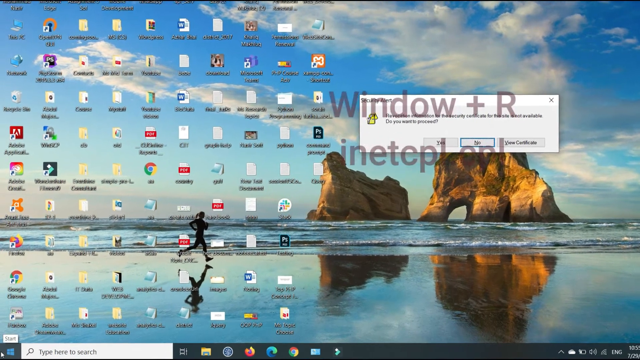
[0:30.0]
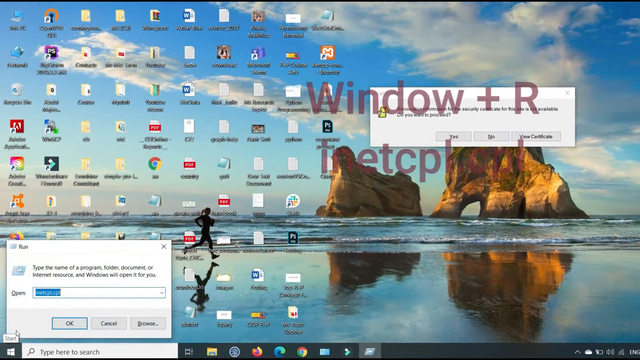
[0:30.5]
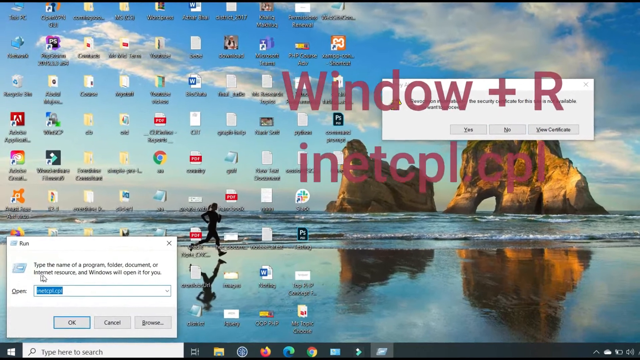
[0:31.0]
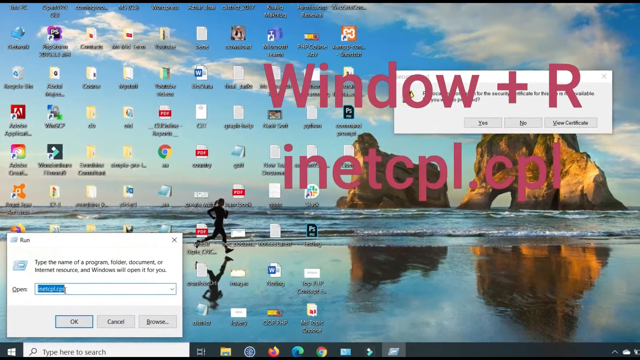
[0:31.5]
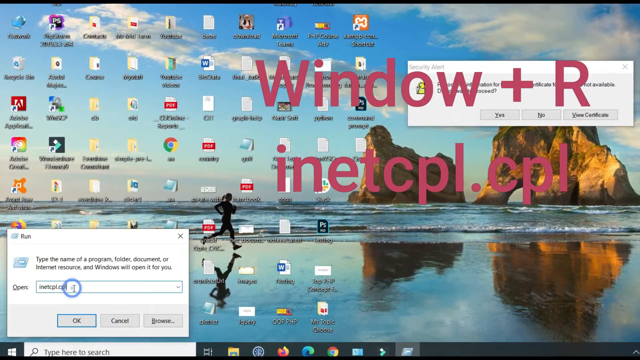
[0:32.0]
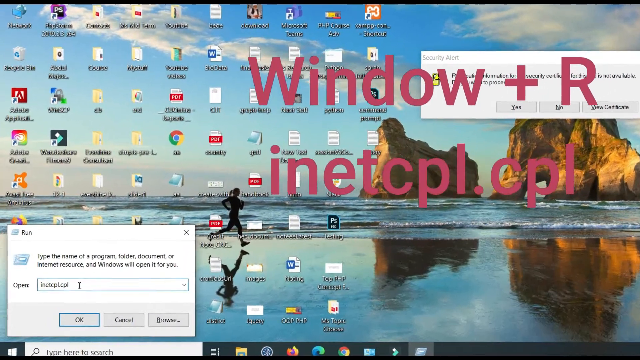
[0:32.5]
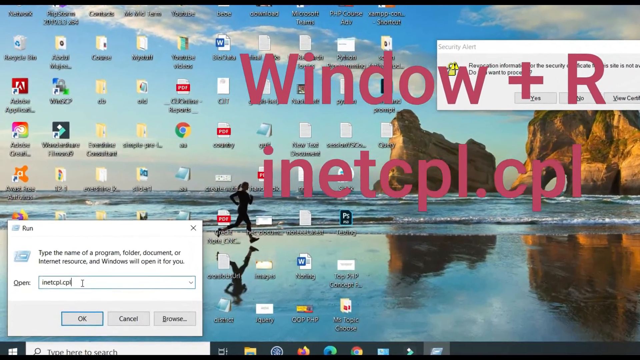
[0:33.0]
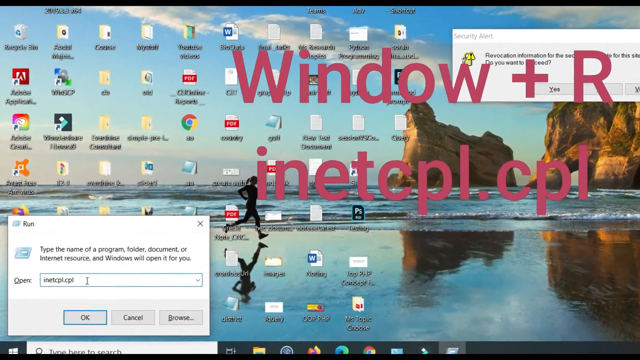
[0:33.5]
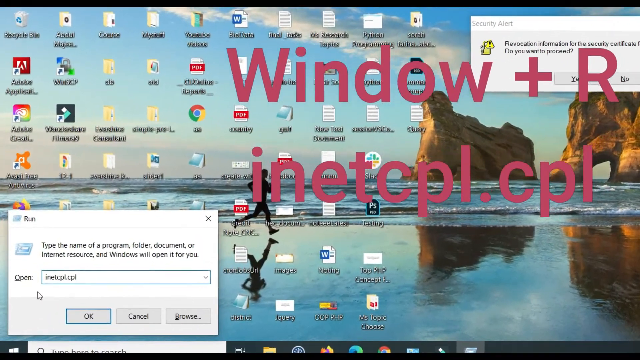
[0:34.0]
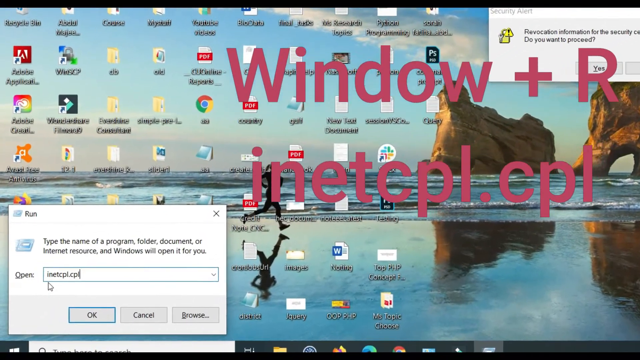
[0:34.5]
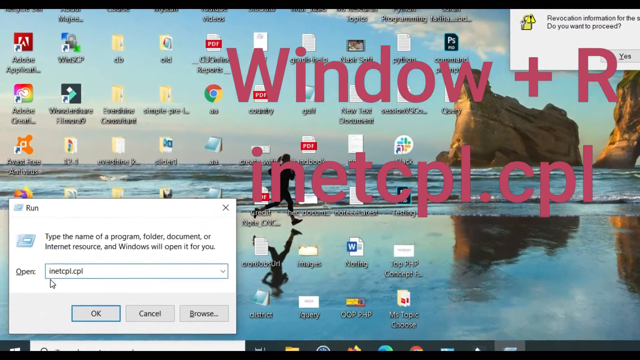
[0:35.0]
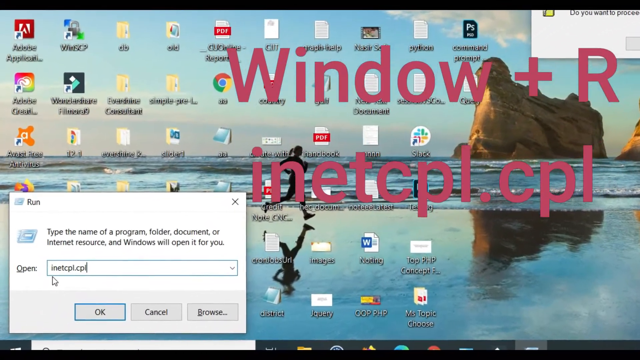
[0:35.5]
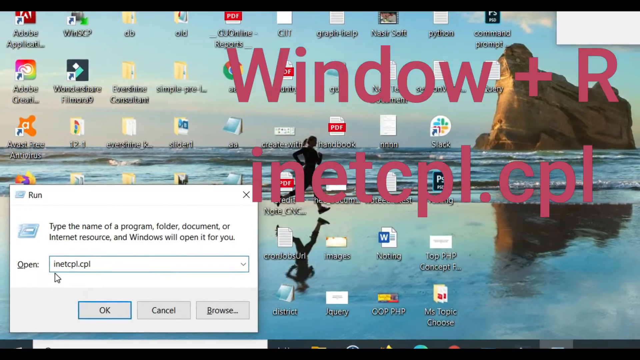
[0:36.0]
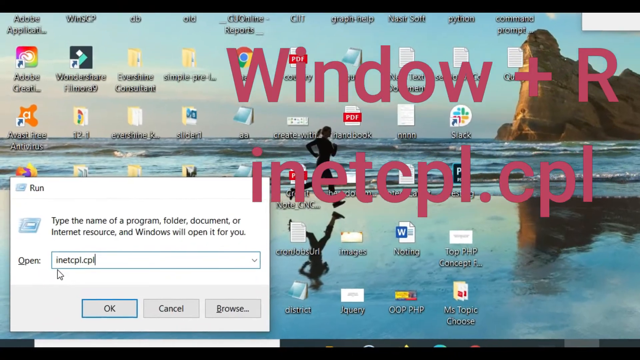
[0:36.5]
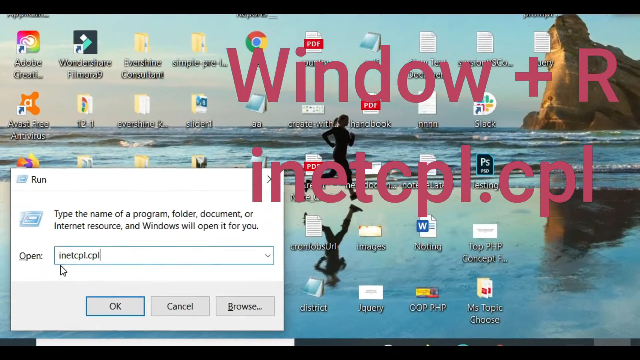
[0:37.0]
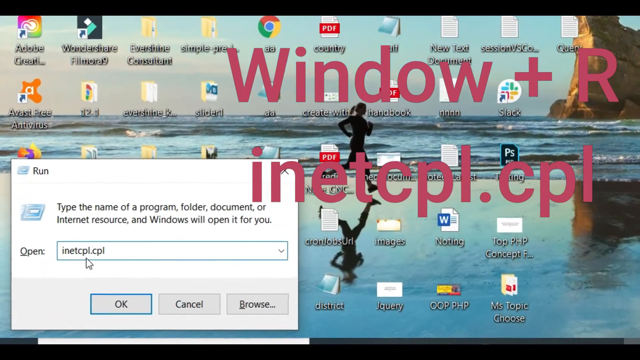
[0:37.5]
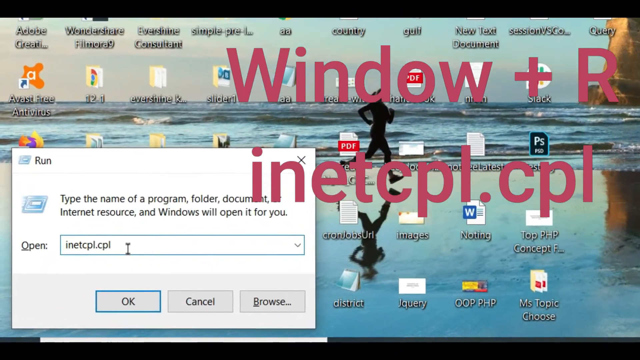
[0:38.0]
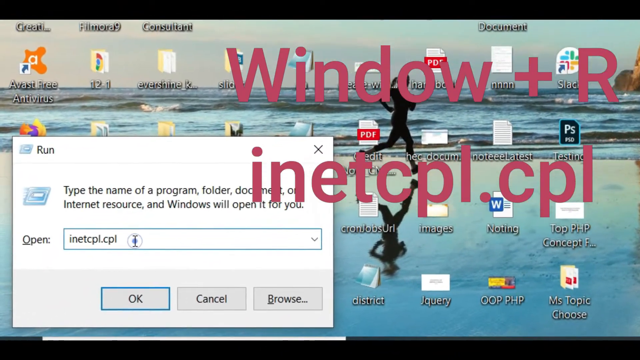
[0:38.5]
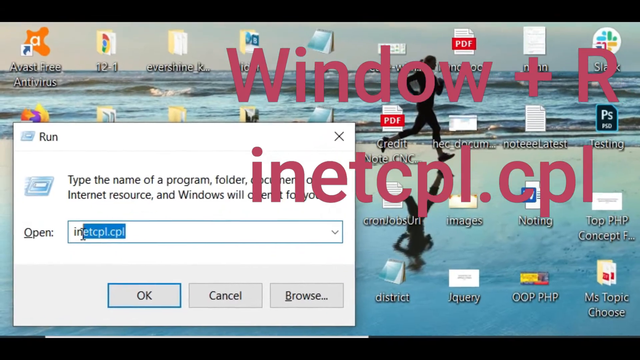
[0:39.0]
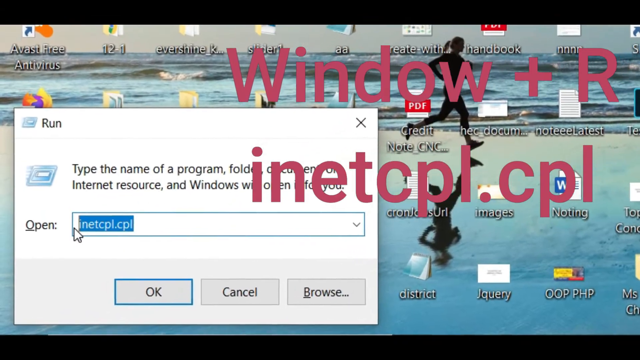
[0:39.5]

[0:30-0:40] In the bottom left of the screen, the Windows run dialog is opened, and a text overlay on the screen reads "Windows plus R." The input typed into the box next to the "Open" title is "inetcpl.cpl," and the video cuts there. The screen is a desktop monitor with dozens of shortcuts on the desktop. The wallpaper is a serene-looking ocean scene with two large boulders out in the middle of the ocean and someone running along the water's edge as the waves come in and go out.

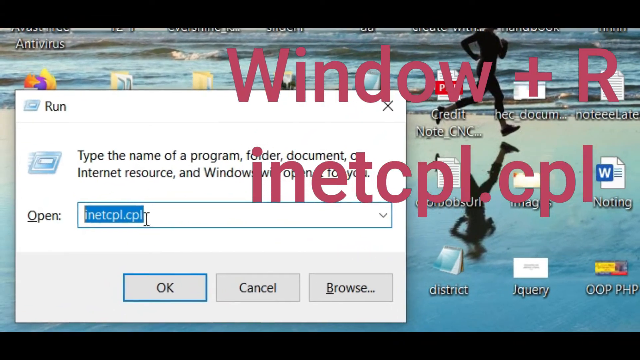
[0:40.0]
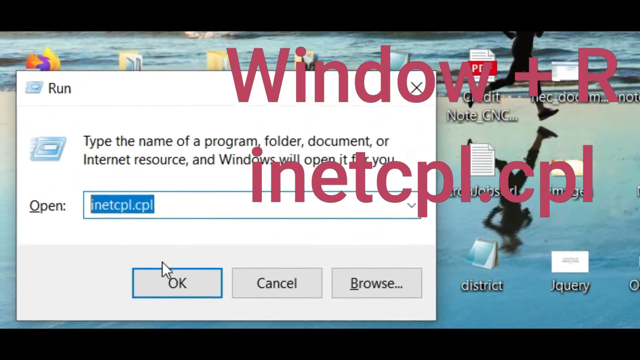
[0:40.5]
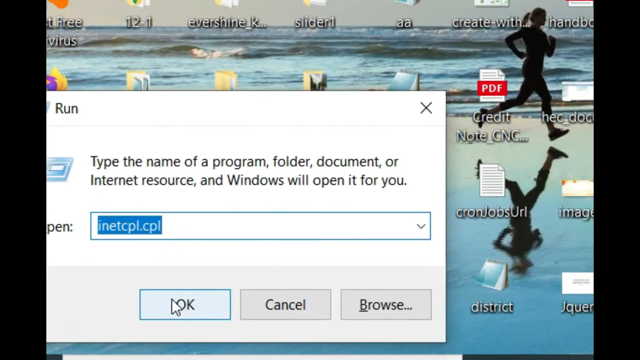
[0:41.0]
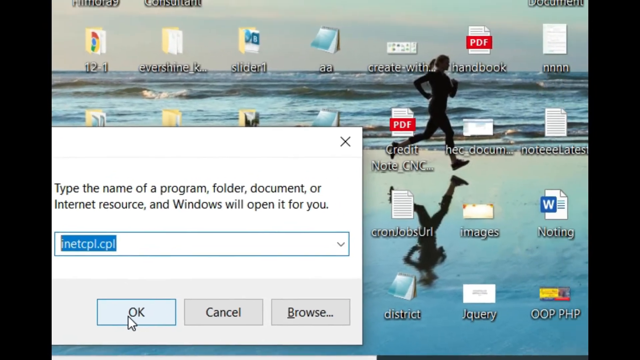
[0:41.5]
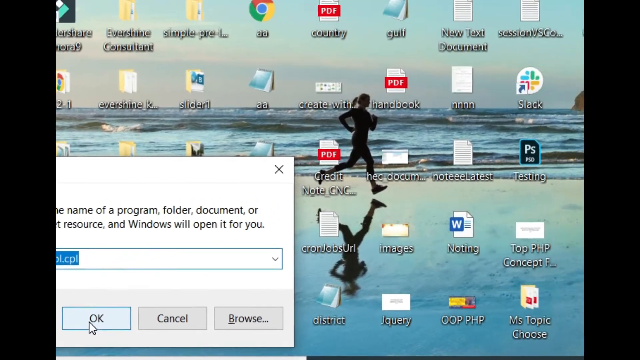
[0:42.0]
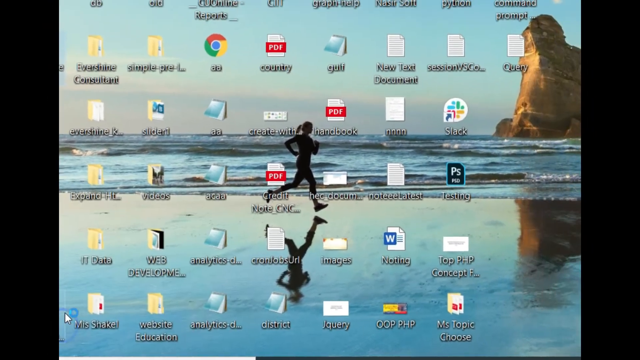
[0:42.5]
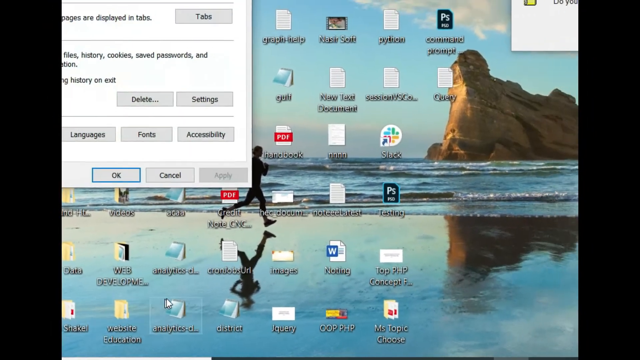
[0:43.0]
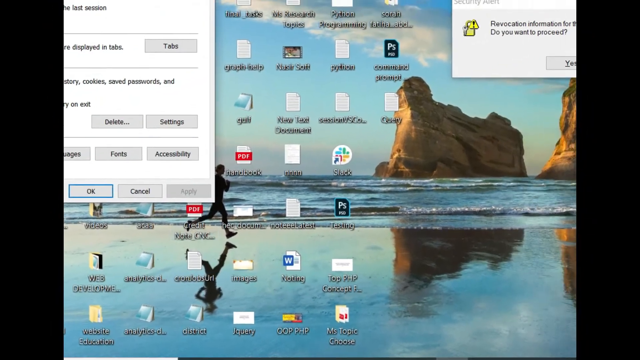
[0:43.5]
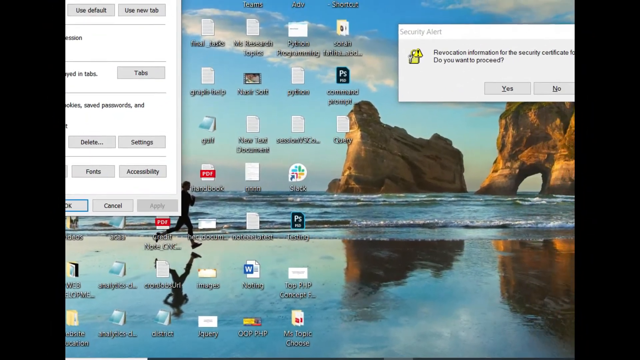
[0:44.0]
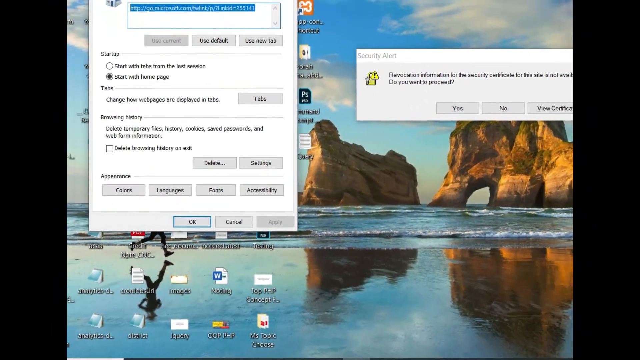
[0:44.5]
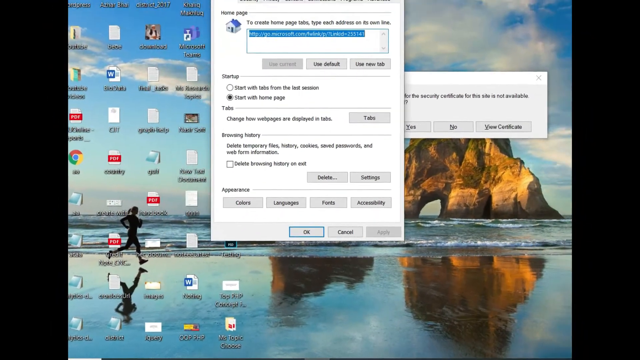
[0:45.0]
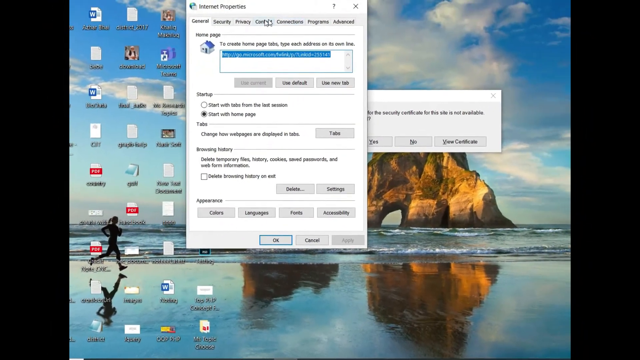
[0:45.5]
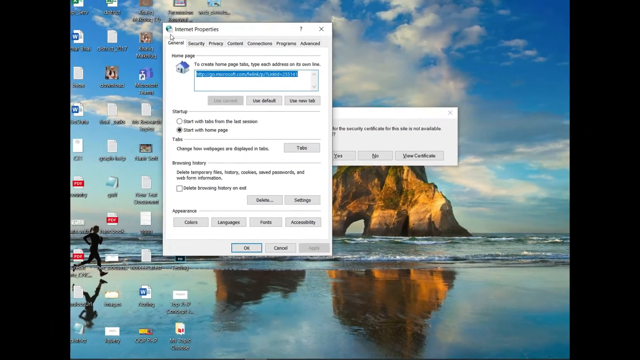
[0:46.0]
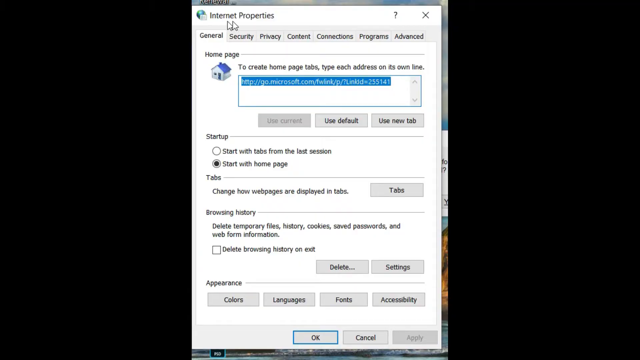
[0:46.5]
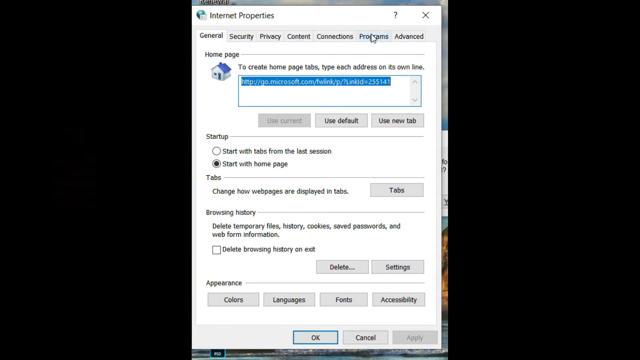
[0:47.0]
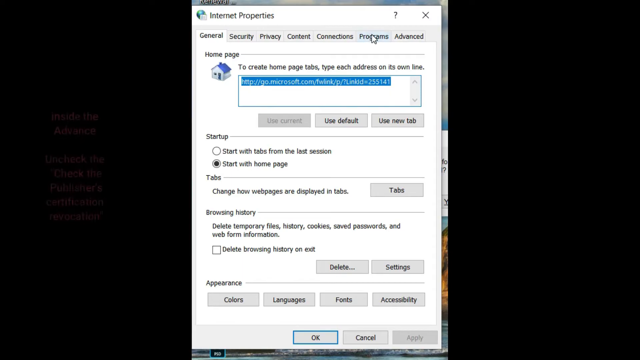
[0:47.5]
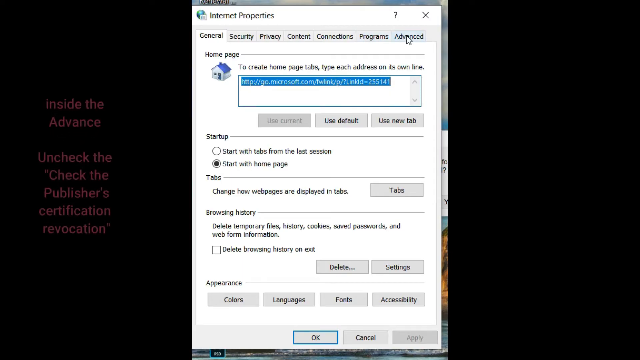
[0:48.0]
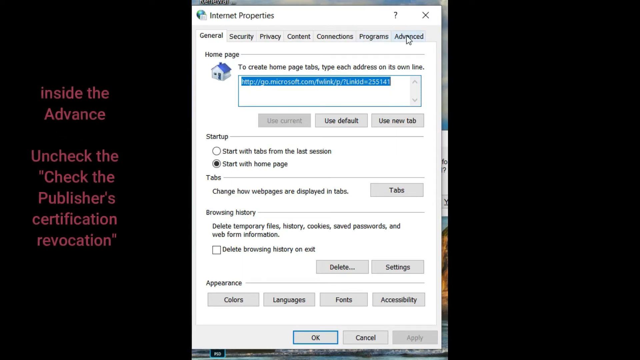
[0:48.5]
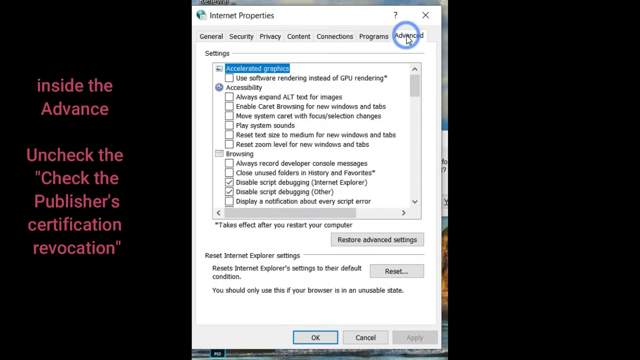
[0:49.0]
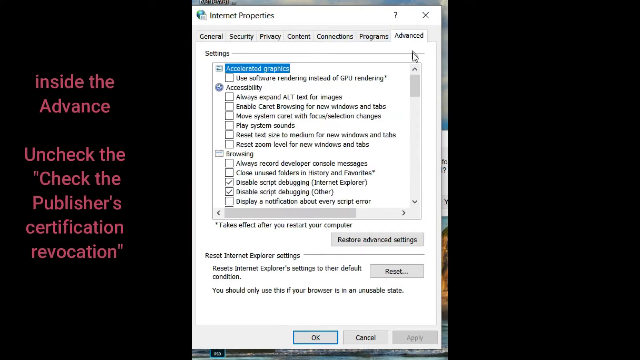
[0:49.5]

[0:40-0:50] After the run command "inetcpl.cpl" is entered and OK is clicked, a new control panel window titled "Internet Properties" appears and is slid over into the middle of the screen. Tabs run across its top: General, Security, Privacy, Content, Connections, Programs, and Advanced.